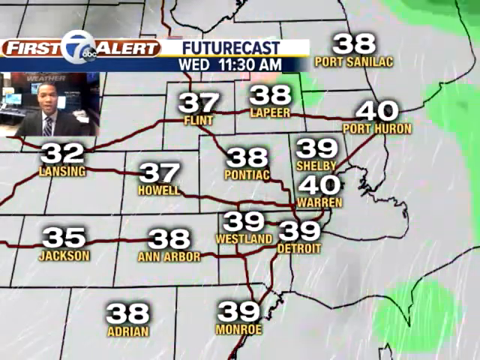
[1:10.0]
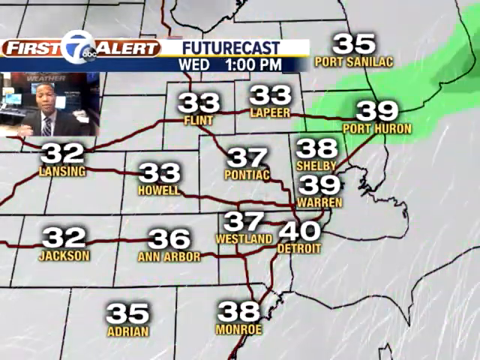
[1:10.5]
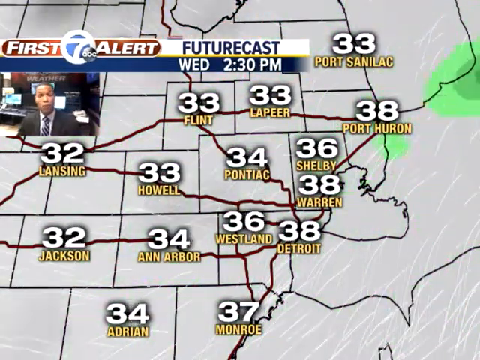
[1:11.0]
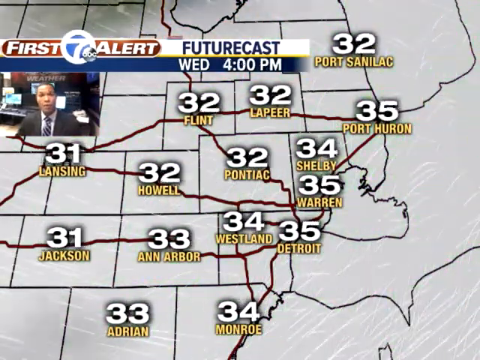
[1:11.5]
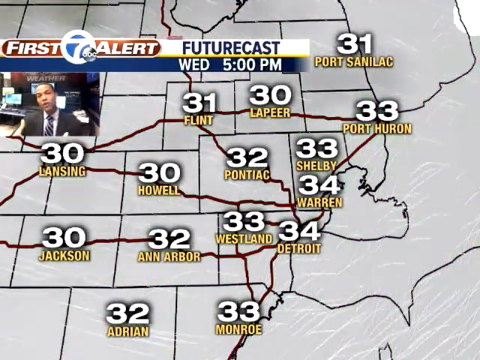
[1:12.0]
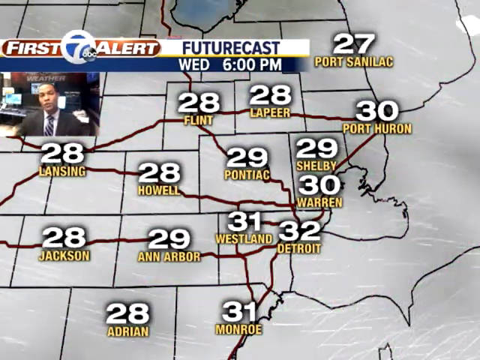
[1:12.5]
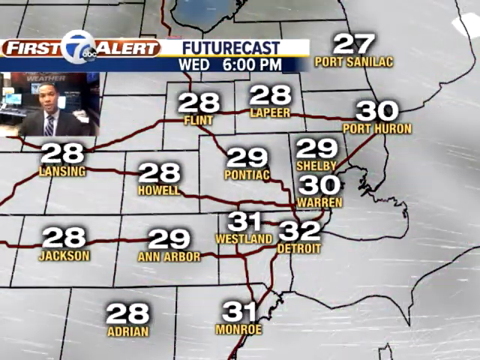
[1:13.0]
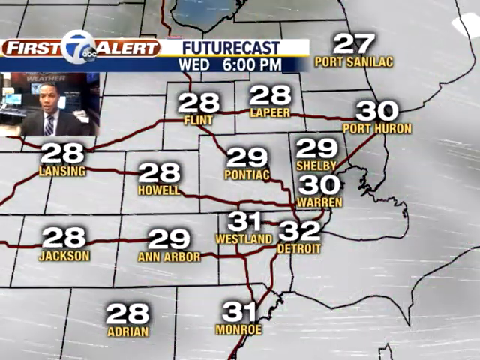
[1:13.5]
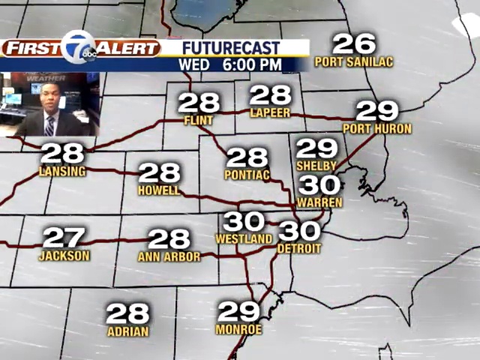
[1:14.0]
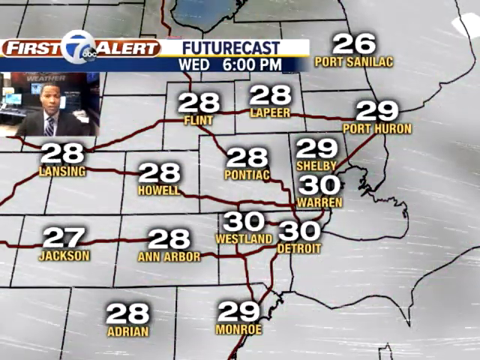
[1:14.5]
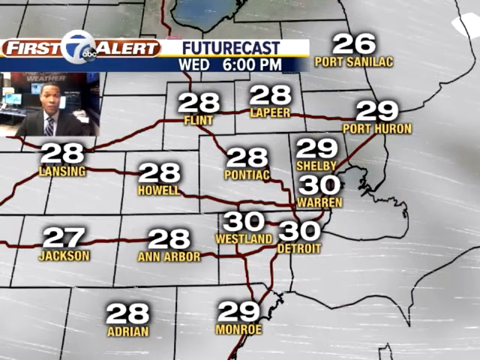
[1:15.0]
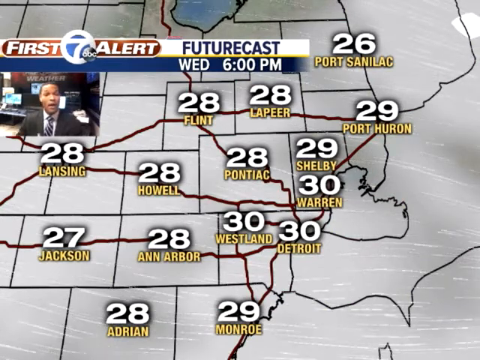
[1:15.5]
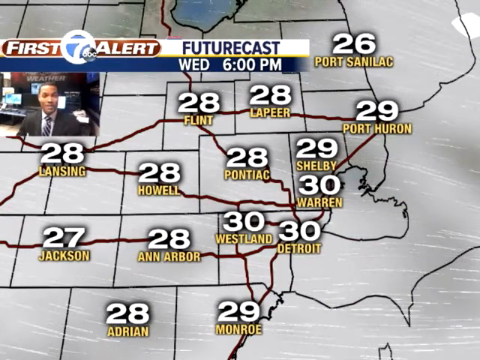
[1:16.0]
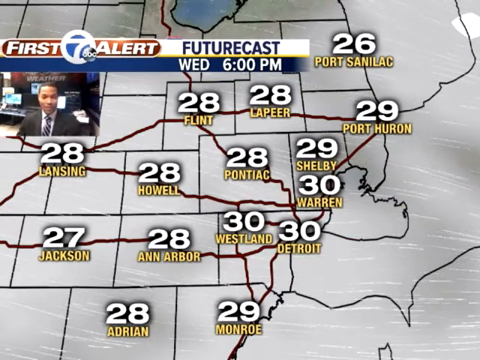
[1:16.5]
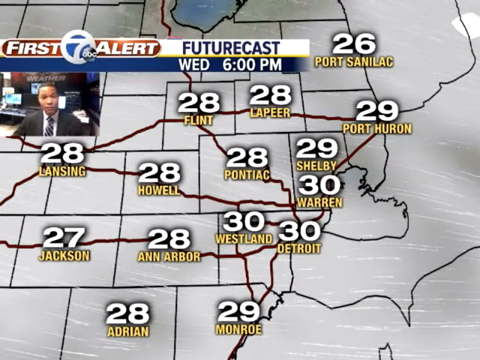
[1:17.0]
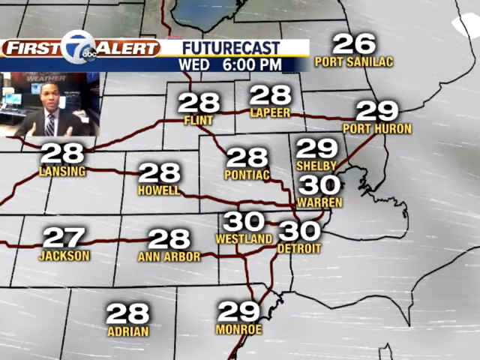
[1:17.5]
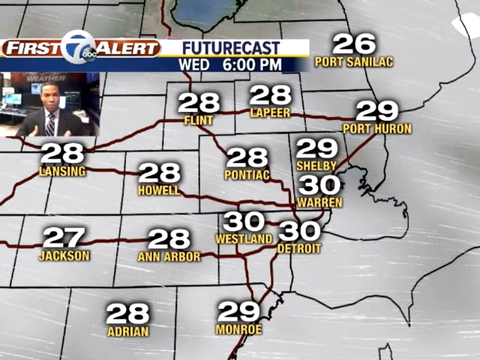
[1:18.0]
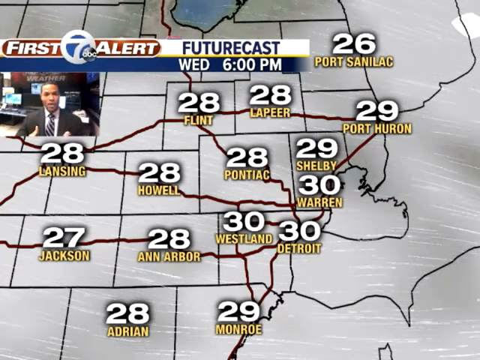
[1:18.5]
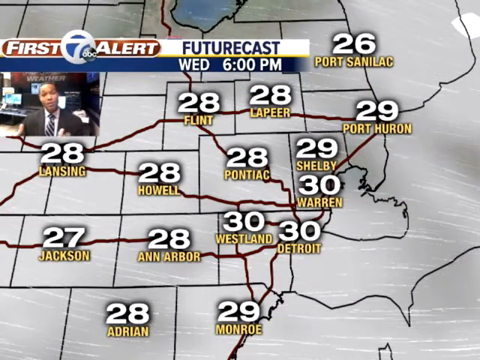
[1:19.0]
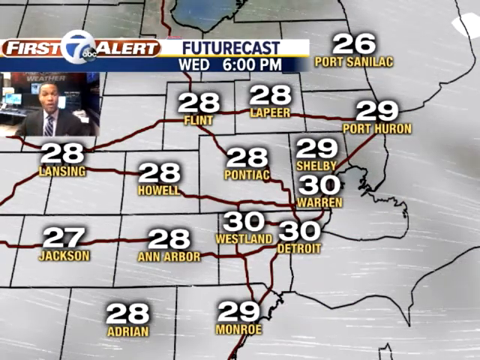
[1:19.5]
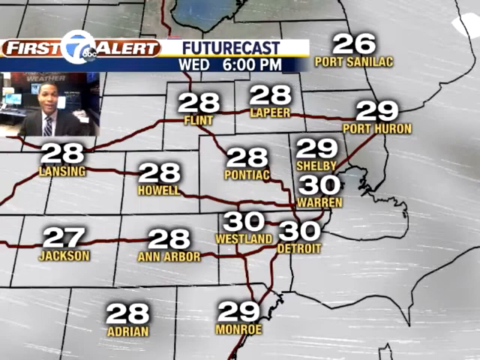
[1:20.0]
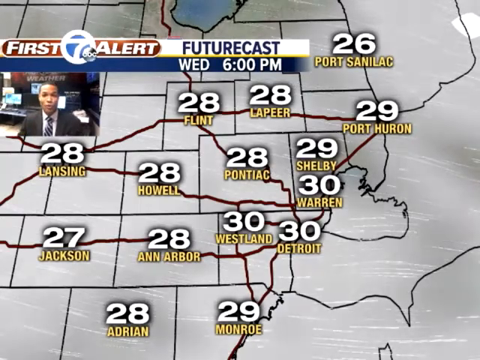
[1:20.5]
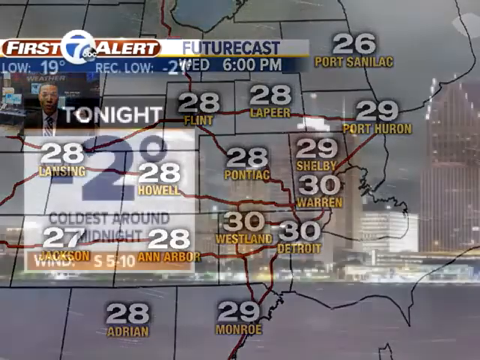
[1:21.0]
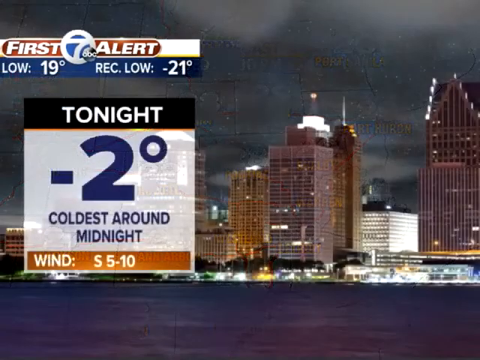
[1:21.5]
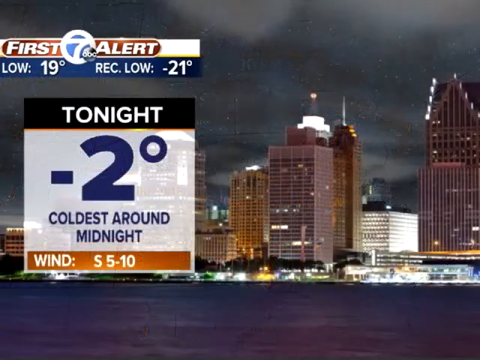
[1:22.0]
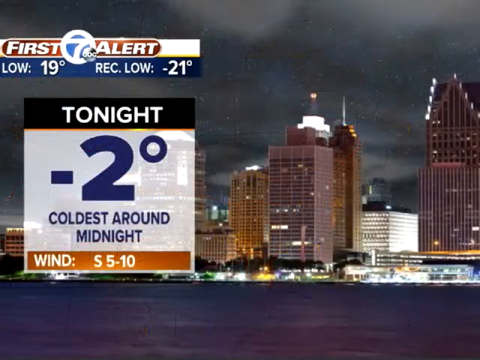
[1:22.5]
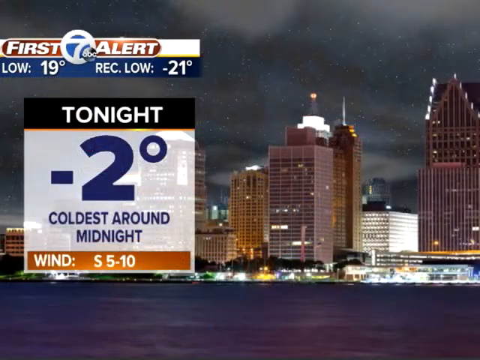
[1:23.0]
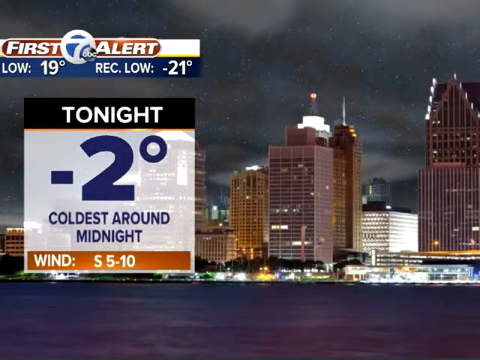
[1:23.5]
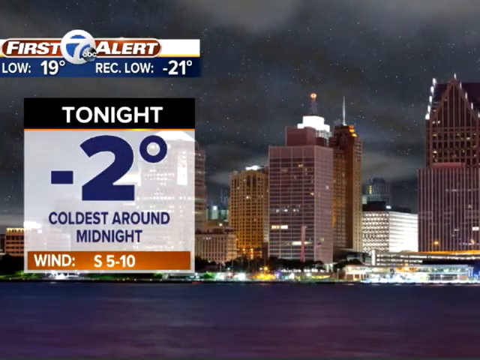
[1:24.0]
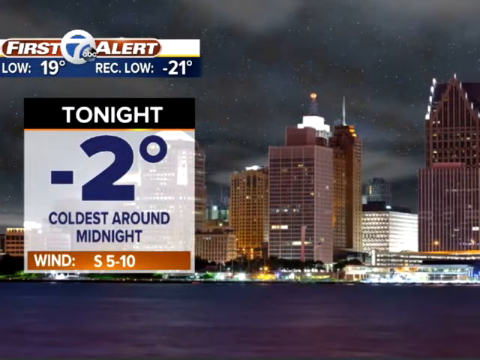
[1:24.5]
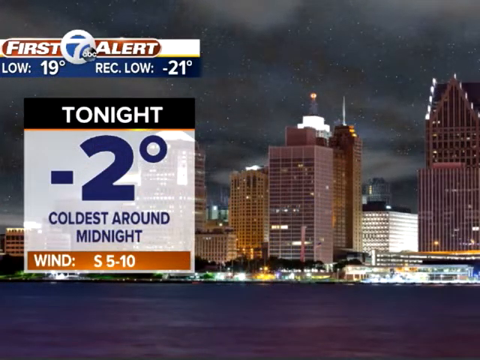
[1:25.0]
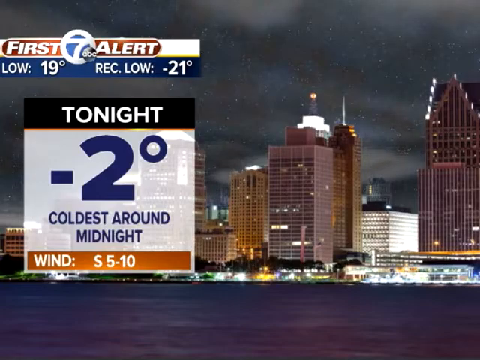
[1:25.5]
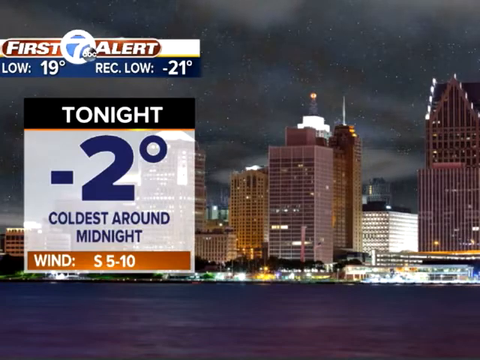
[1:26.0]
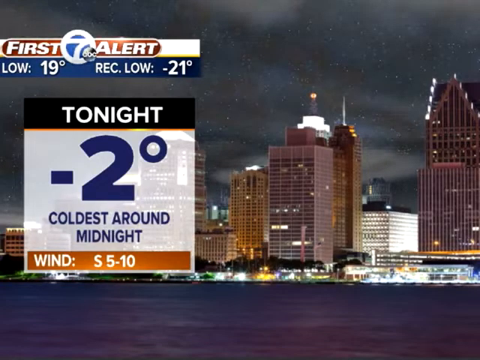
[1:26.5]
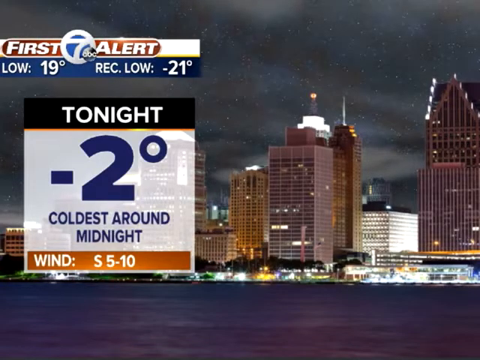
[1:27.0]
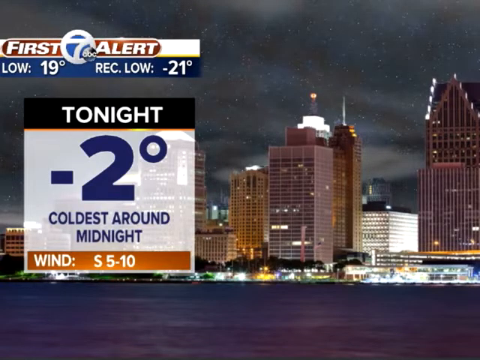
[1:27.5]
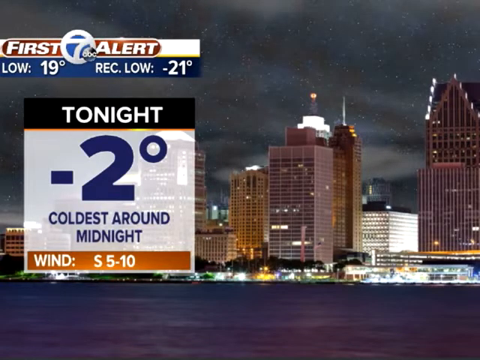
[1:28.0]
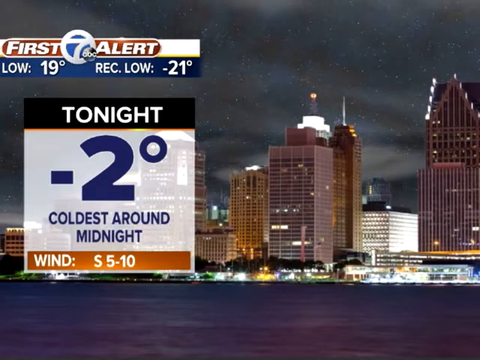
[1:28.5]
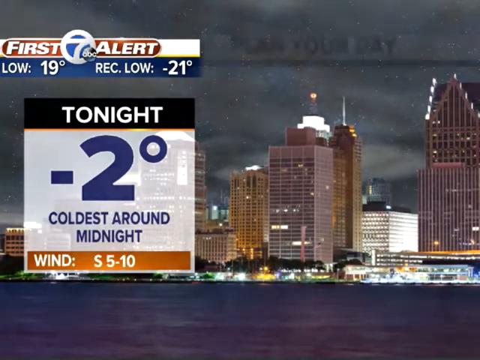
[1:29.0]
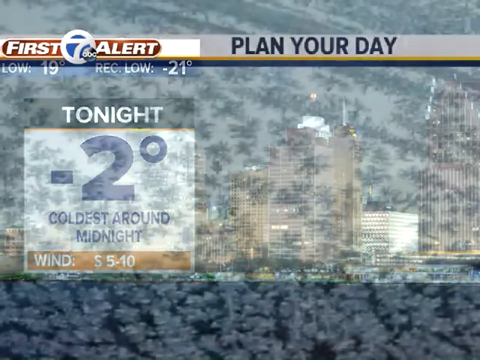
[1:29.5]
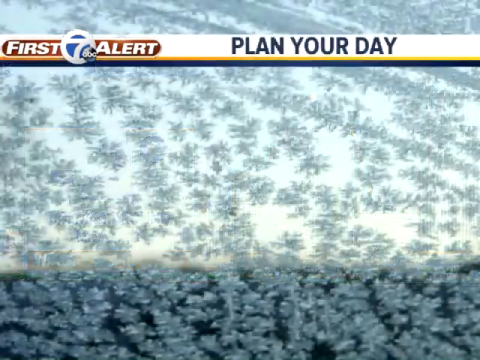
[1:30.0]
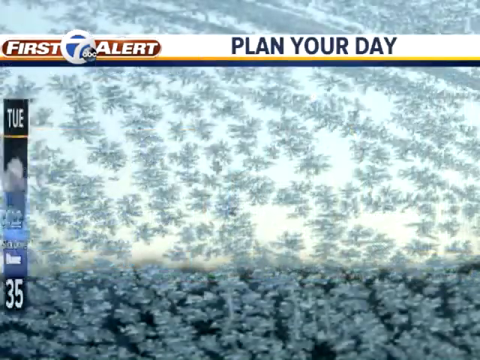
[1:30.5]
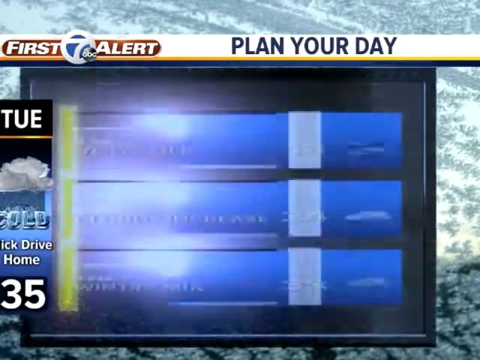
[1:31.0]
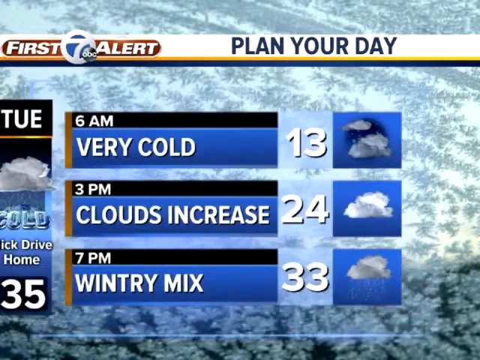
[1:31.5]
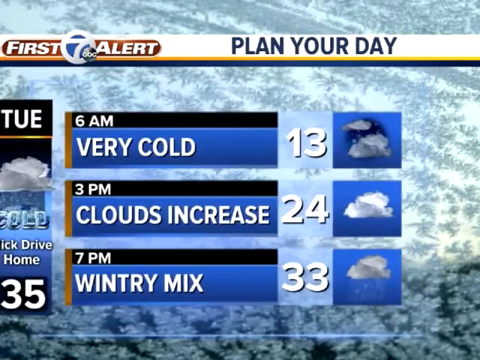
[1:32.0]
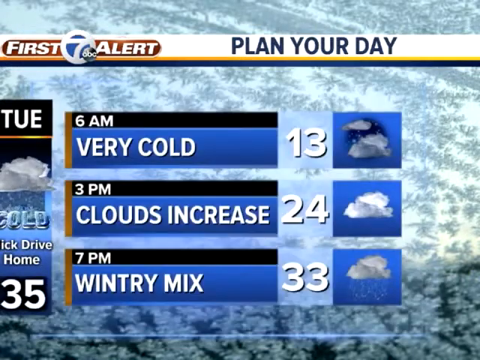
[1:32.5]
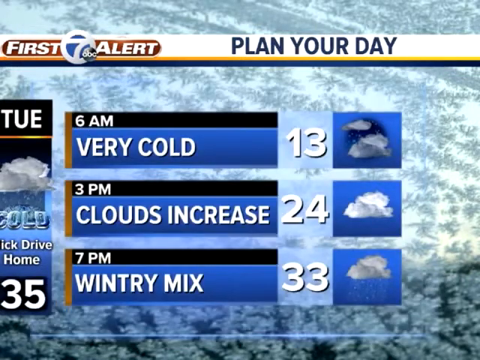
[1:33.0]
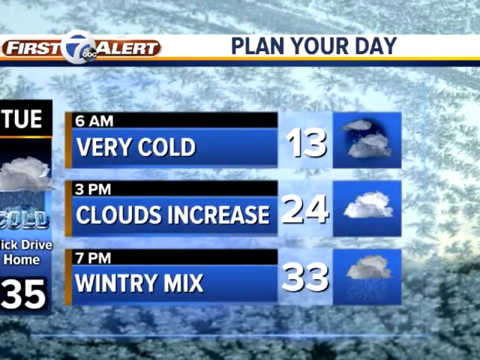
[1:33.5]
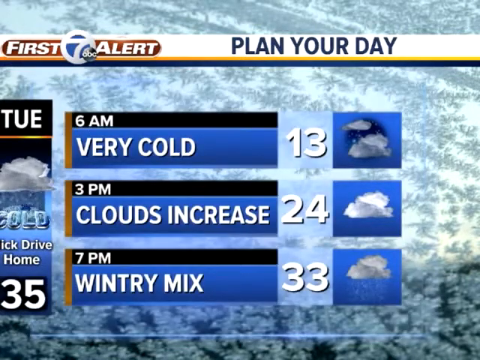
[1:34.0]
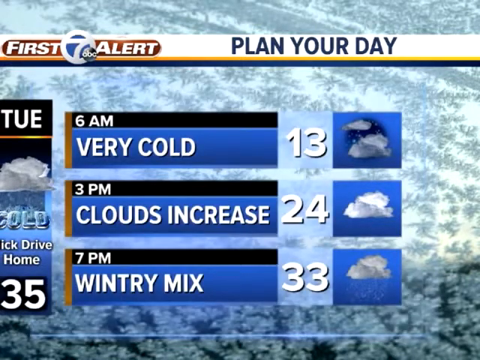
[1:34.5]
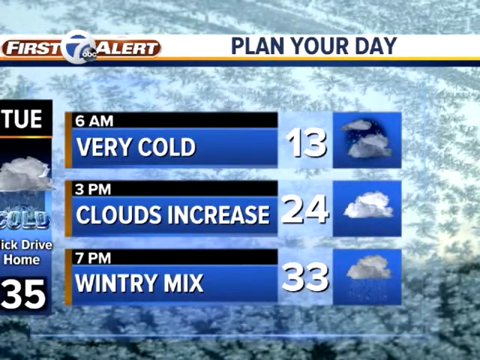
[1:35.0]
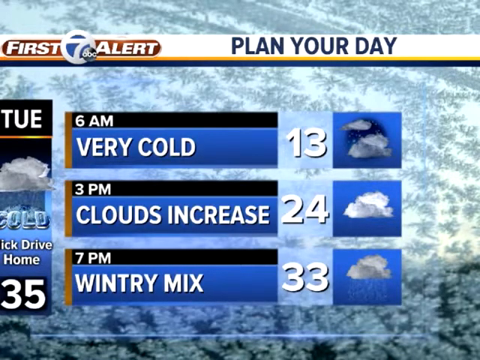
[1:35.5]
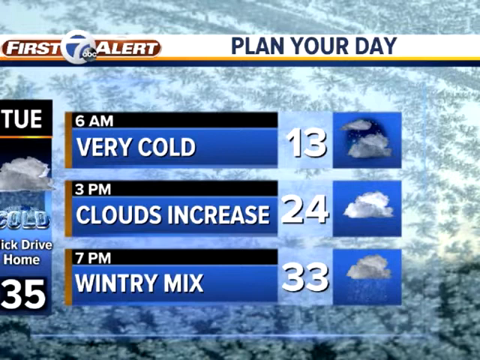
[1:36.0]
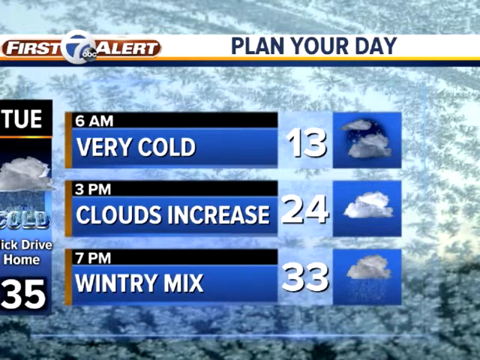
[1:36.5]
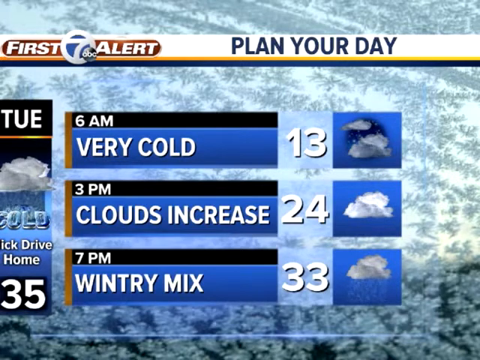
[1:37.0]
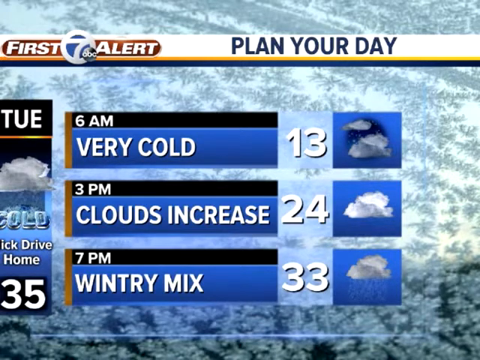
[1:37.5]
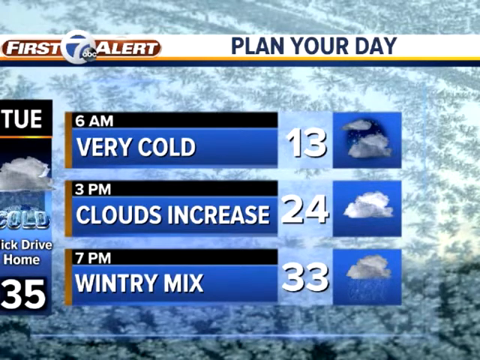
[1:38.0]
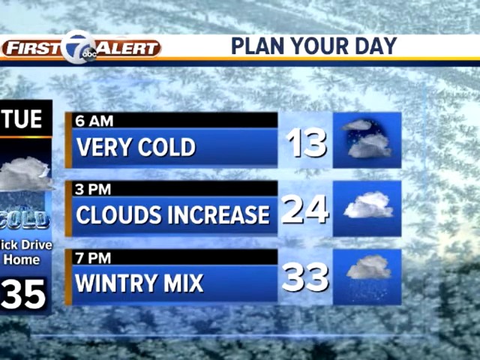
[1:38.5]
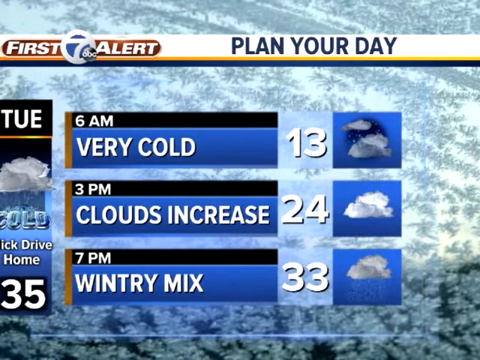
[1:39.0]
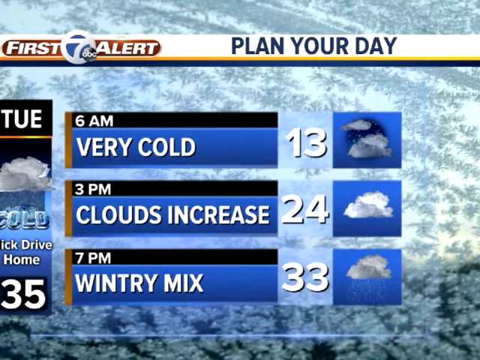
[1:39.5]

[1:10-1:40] A map shows areas around Detroit, using different colors to indicate temperatures and the patterns expected in the different regions. Initially the map is almost completely covered in gray, and the graphics show wind blowing from the south going north. In the top left corner, a small screen shows the presenter, a young Black man, smartly and formally dressed, with a large number of laptops switched on behind him. The map then transitions to show more gray occupying most of the screen, this time with wind blowing from the west to the east, for the predictions for Wednesday at 6 pm. It then transitions further to the predictions for tonight, with a temperature of 19 degrees and temperatures dropping as low as minus 2 degrees later tonight. In the background are some skyscrapers and modern buildings.